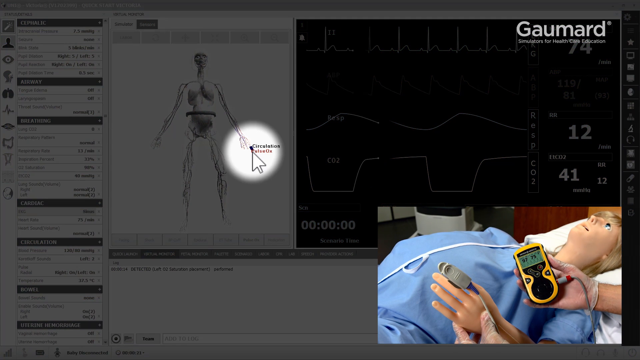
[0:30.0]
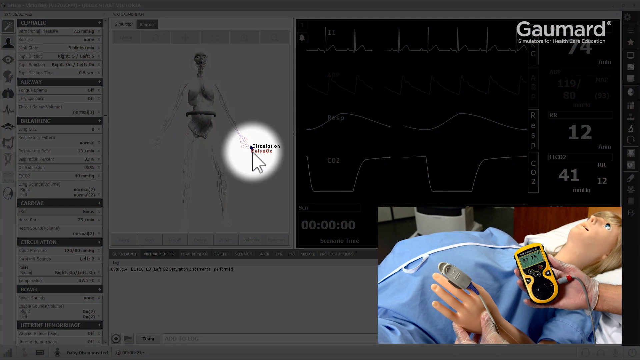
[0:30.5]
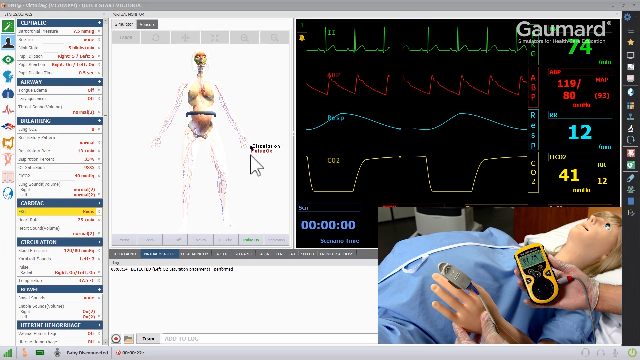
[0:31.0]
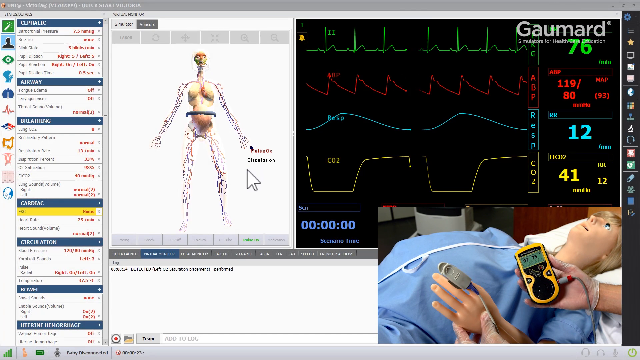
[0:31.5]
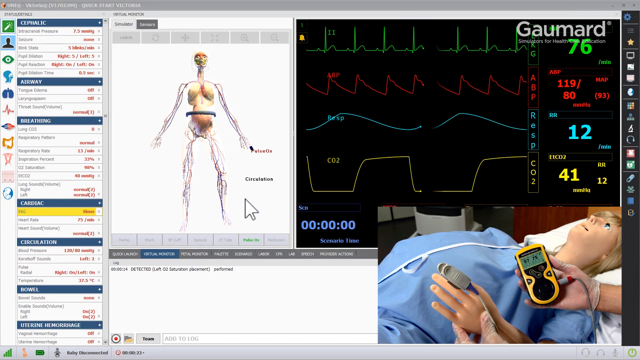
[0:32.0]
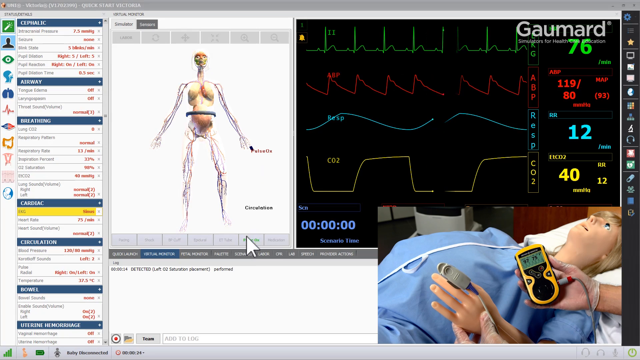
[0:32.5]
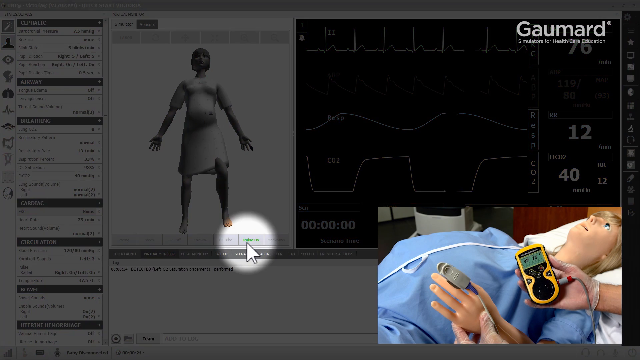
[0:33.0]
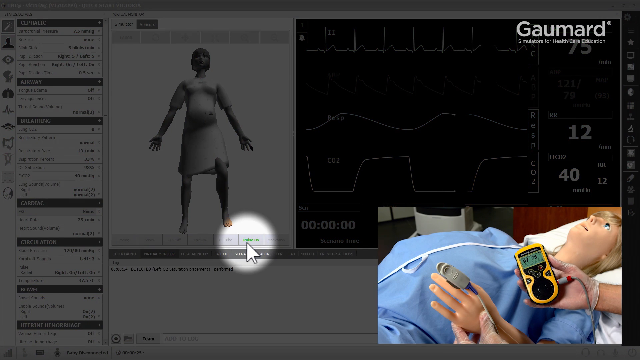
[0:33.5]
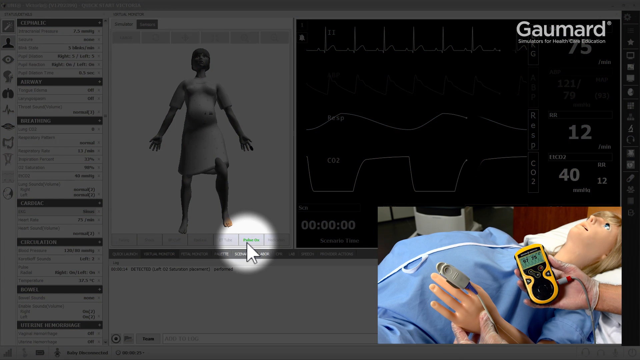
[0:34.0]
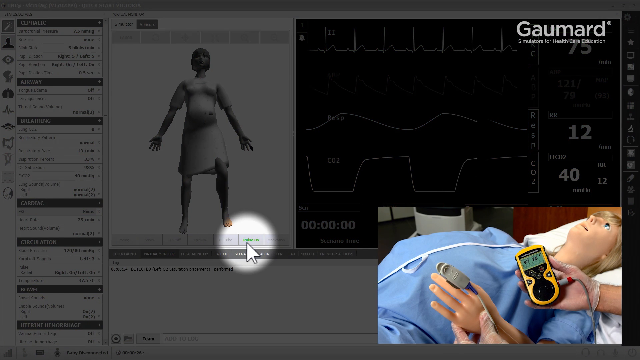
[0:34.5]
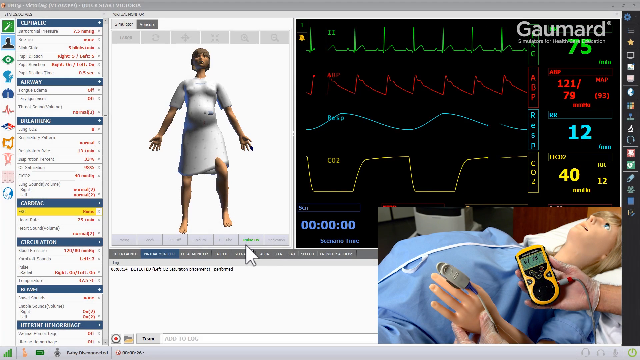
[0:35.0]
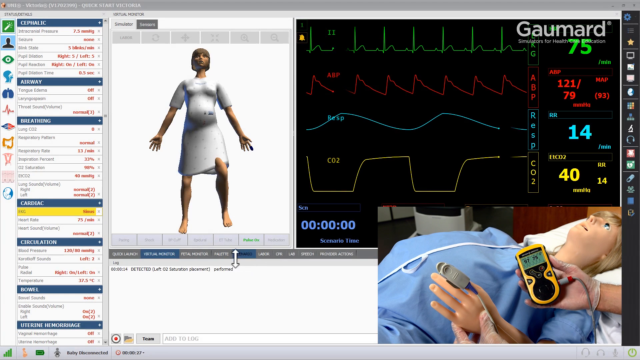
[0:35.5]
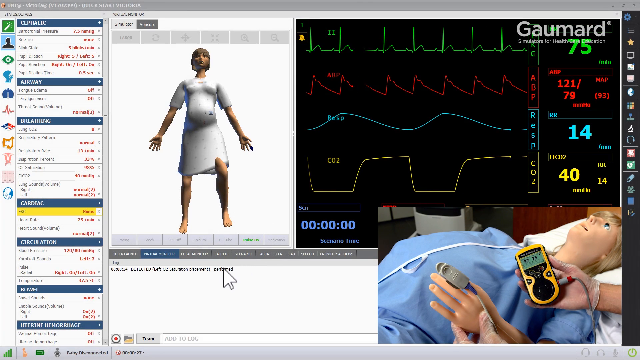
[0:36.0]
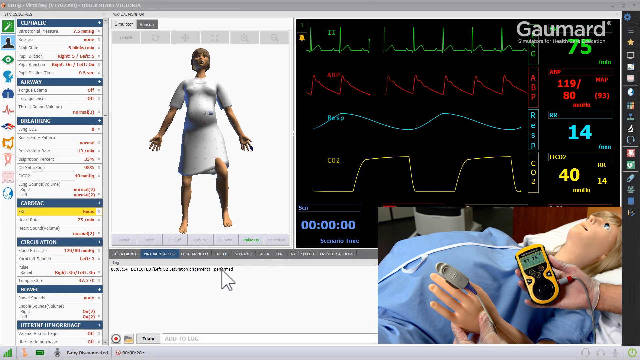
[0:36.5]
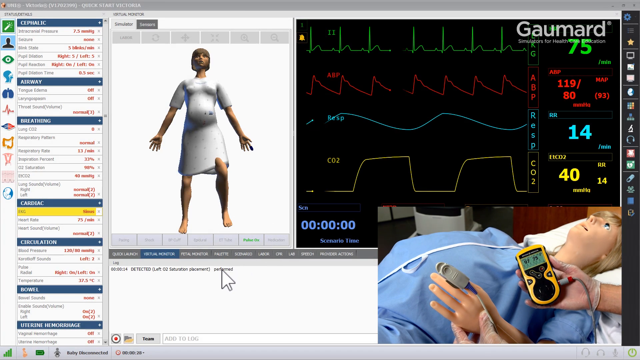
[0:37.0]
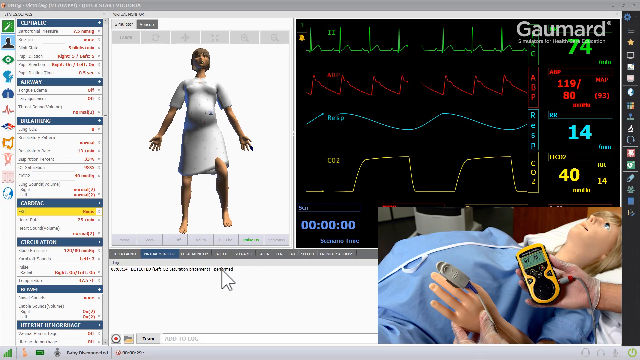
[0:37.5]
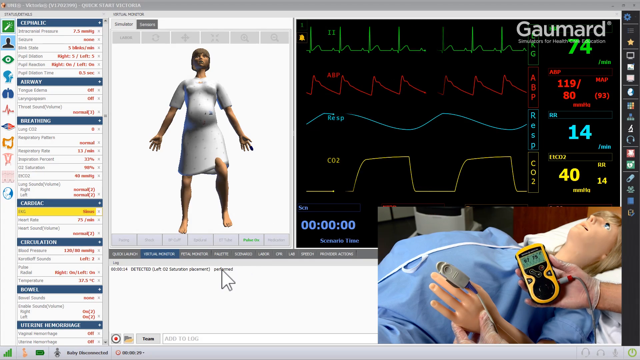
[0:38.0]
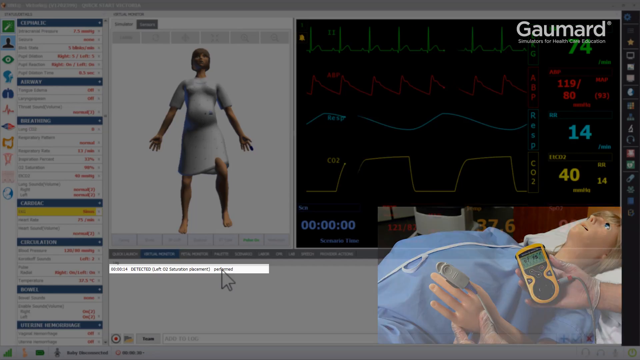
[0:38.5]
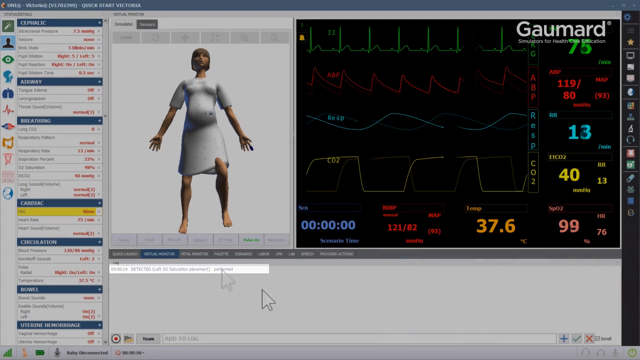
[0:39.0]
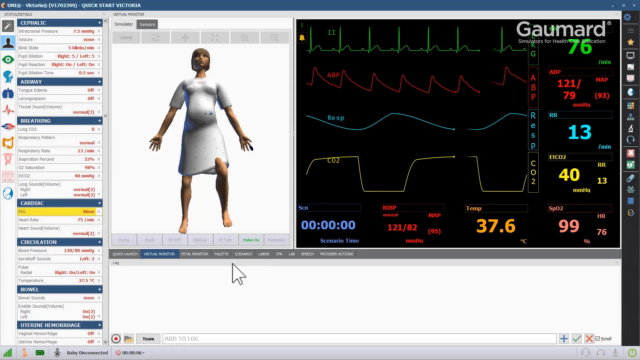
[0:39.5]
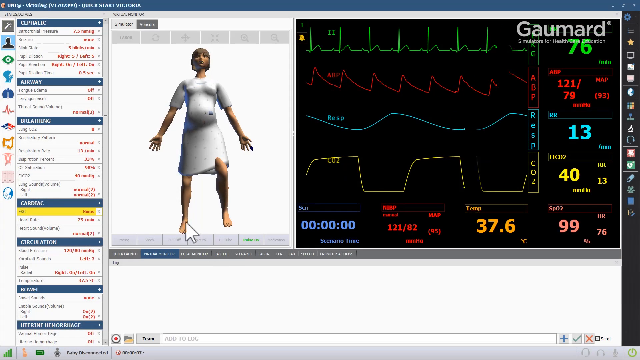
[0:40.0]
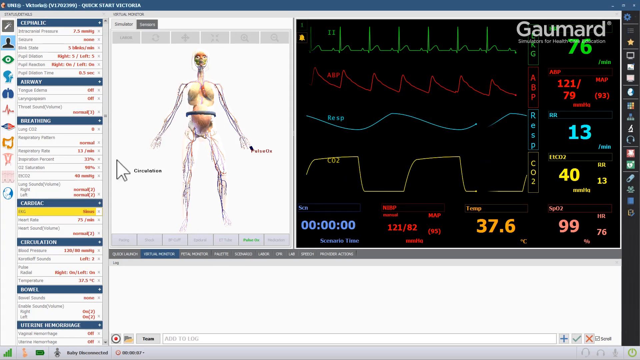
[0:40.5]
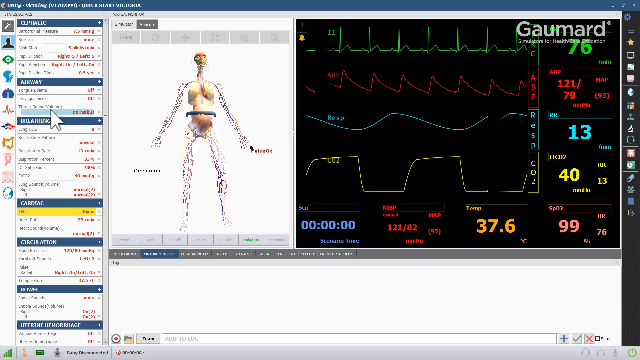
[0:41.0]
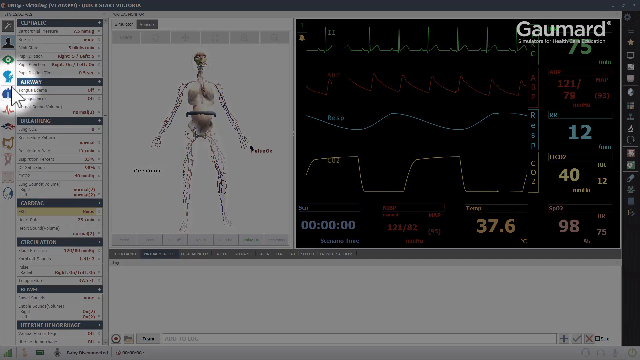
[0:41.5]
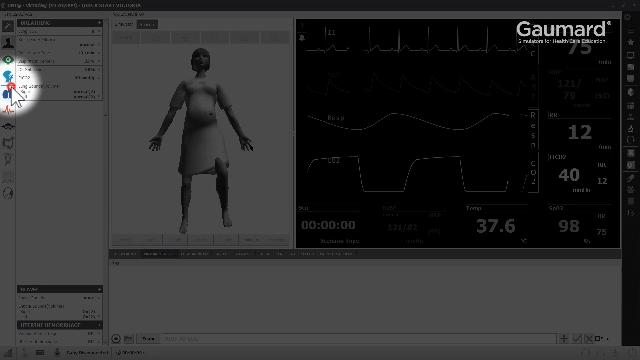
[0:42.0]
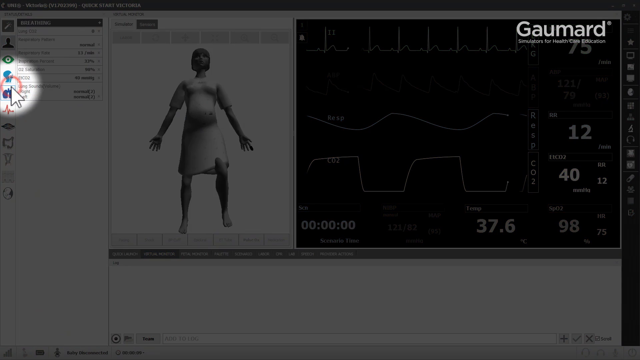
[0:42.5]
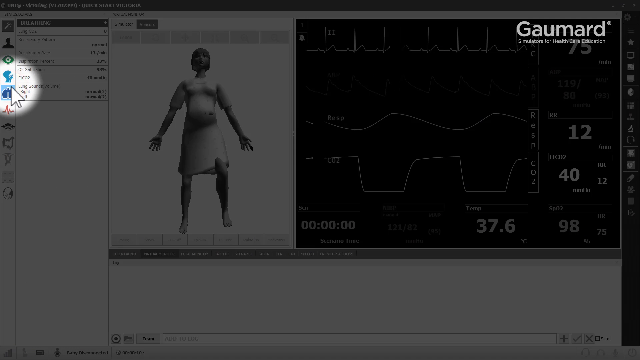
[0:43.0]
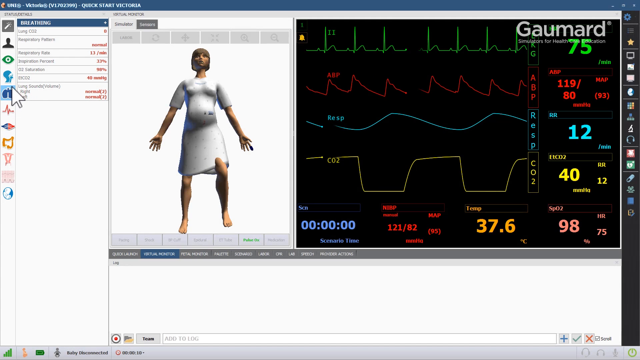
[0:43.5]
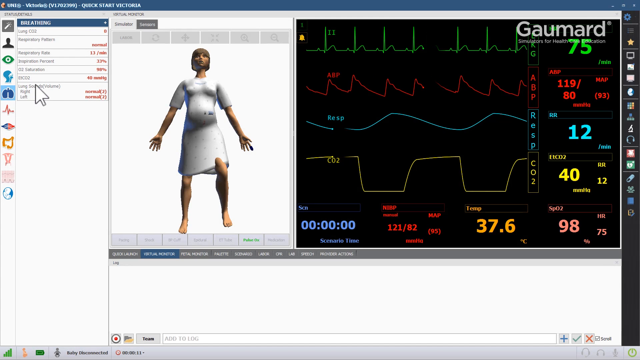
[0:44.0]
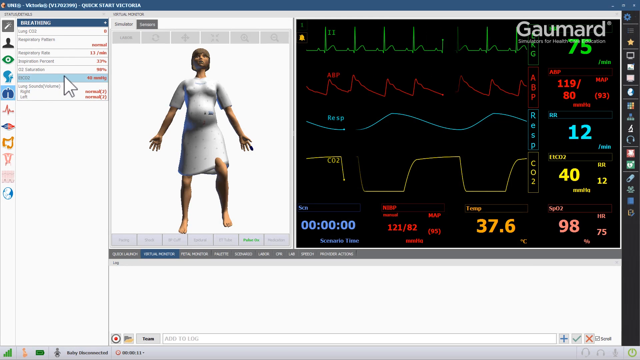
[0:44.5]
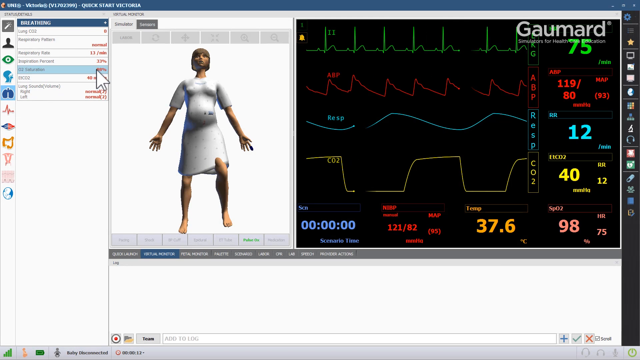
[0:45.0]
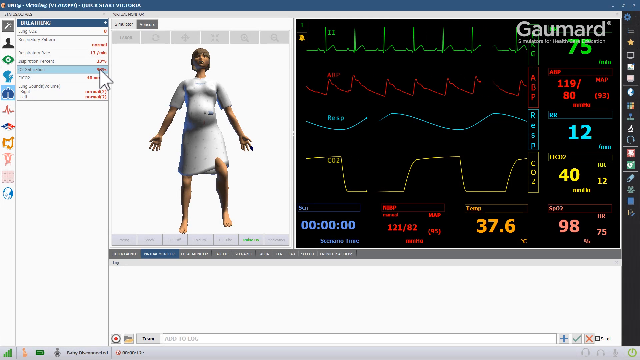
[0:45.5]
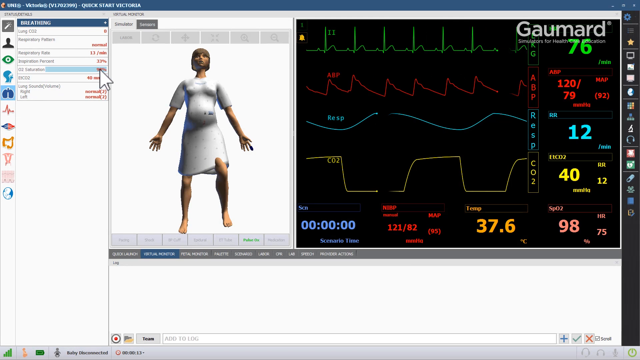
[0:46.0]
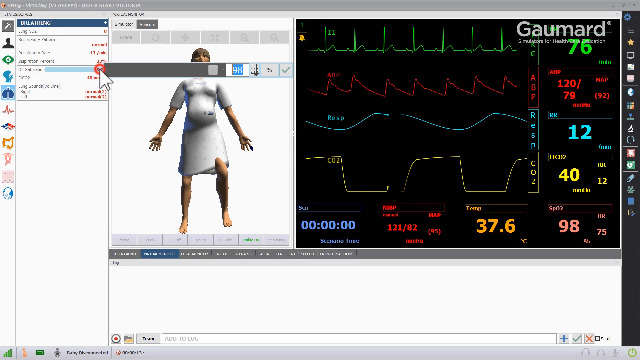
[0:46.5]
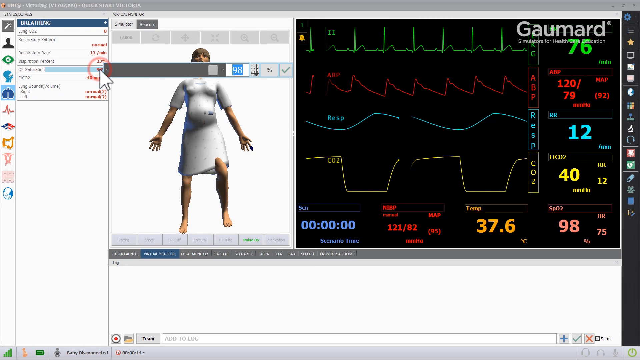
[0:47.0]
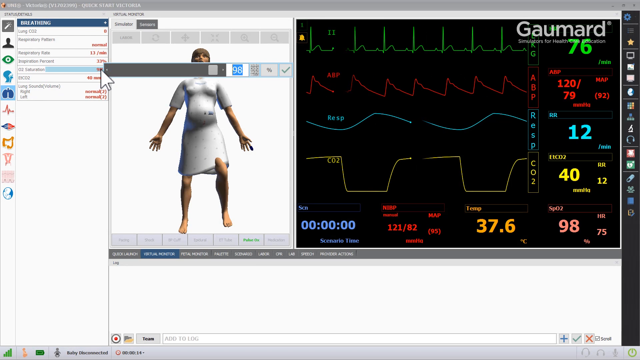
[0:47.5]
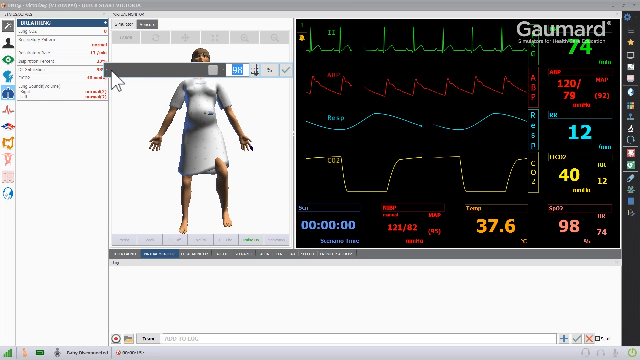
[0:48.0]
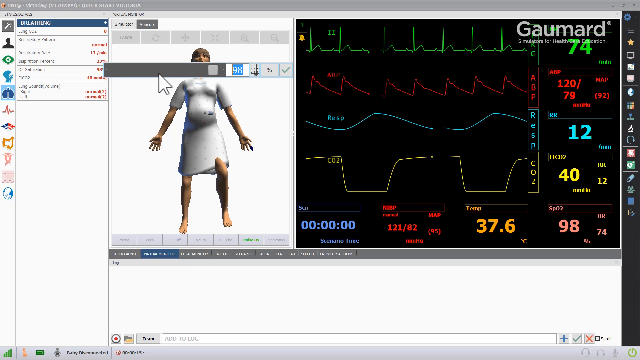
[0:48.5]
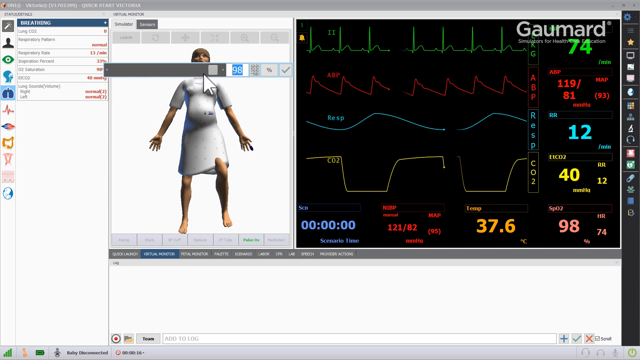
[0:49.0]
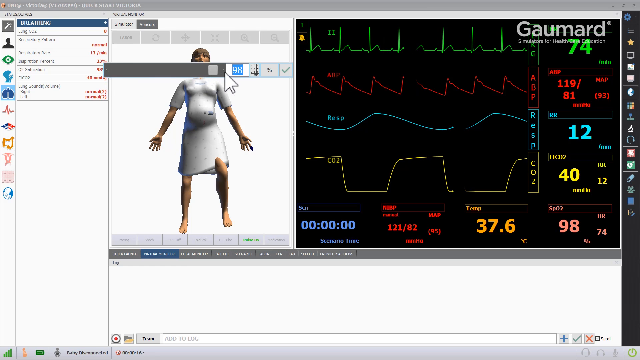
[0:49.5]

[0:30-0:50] Information about the device and where its placement should happen is shown. The demonstration is on a woman who is expecting a baby, and the pulse oximeter is placed on the index finger of her left hand.